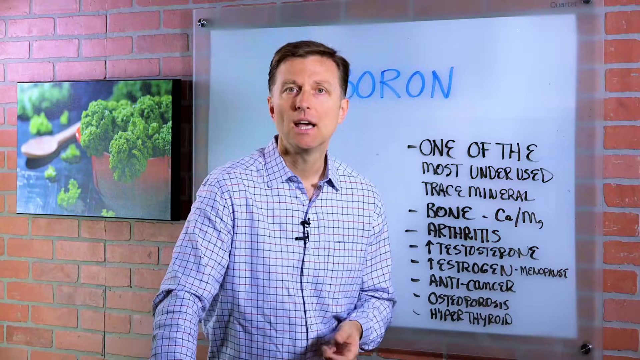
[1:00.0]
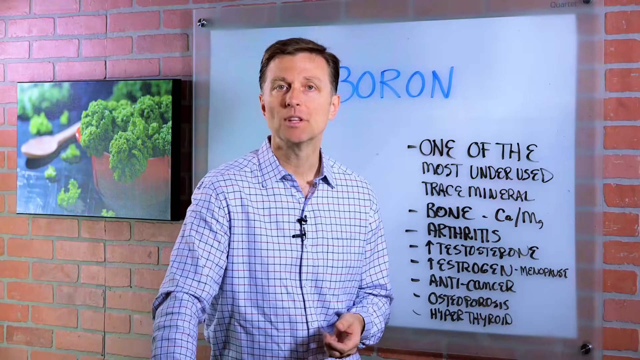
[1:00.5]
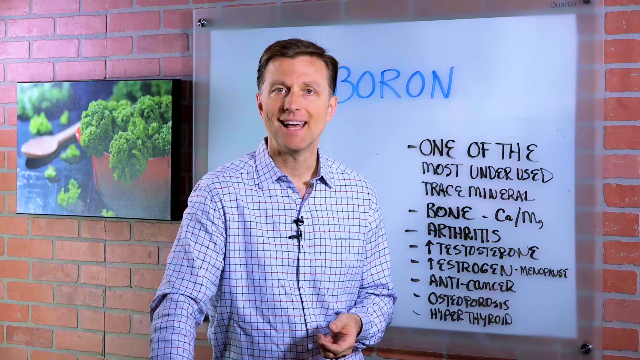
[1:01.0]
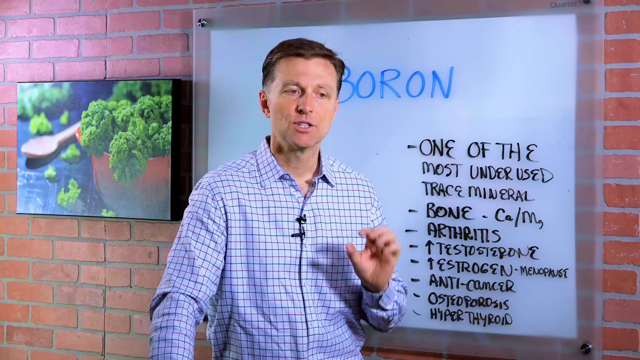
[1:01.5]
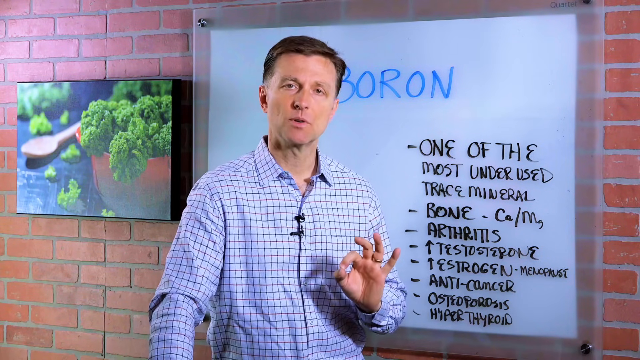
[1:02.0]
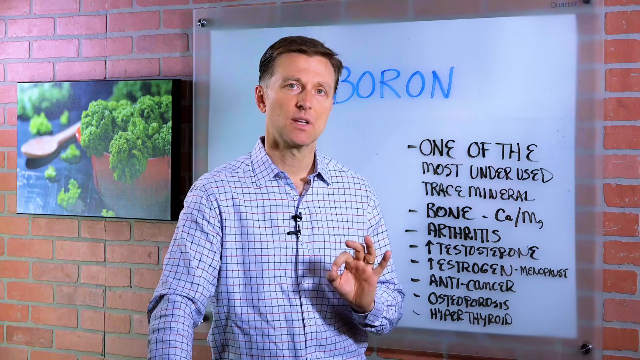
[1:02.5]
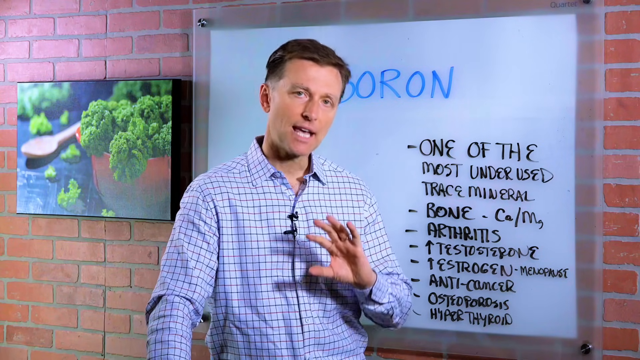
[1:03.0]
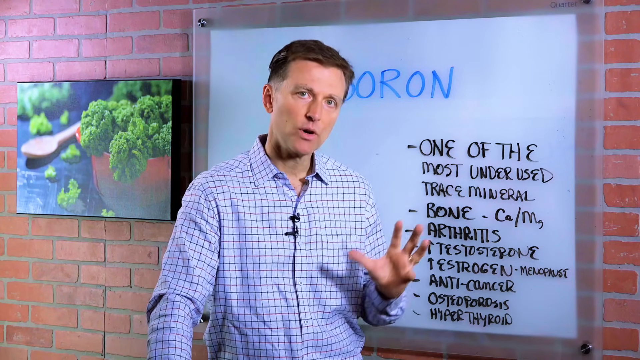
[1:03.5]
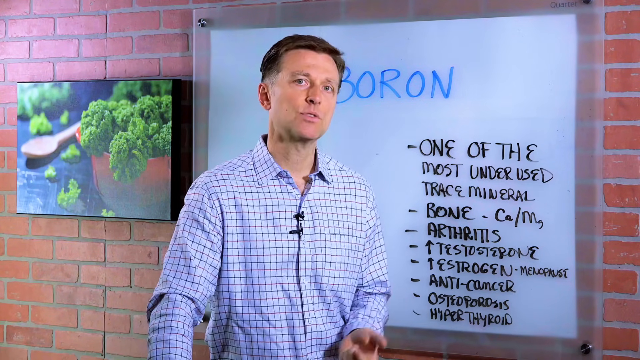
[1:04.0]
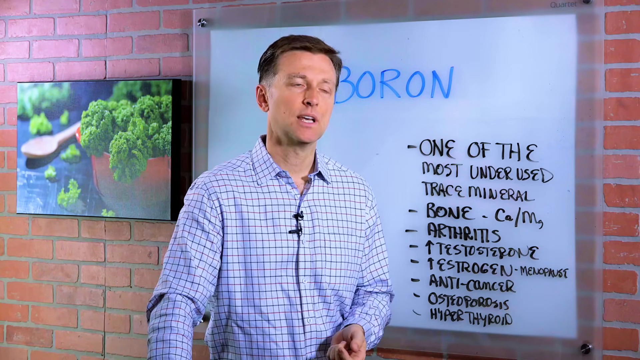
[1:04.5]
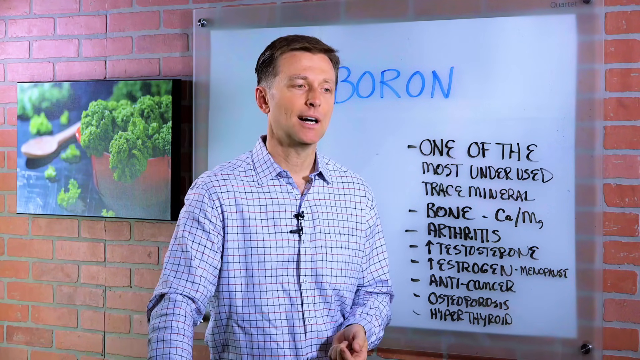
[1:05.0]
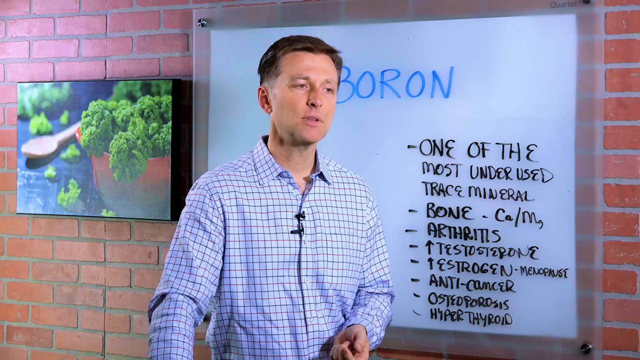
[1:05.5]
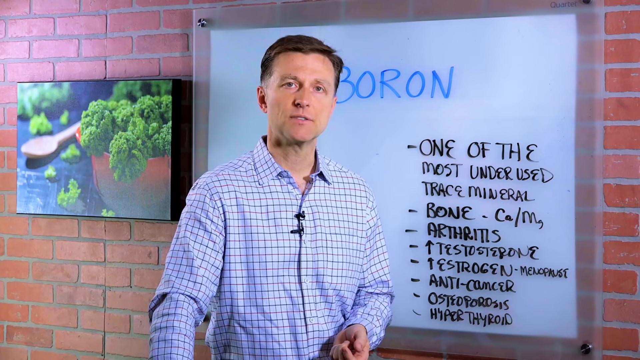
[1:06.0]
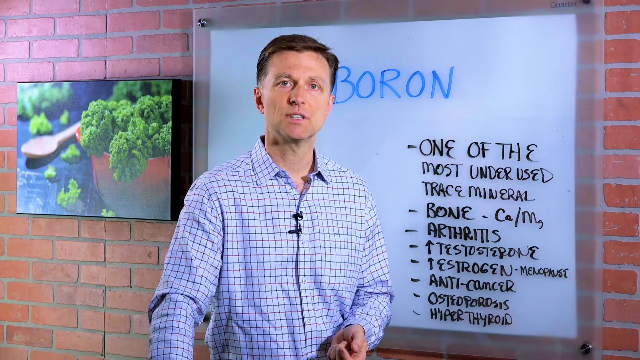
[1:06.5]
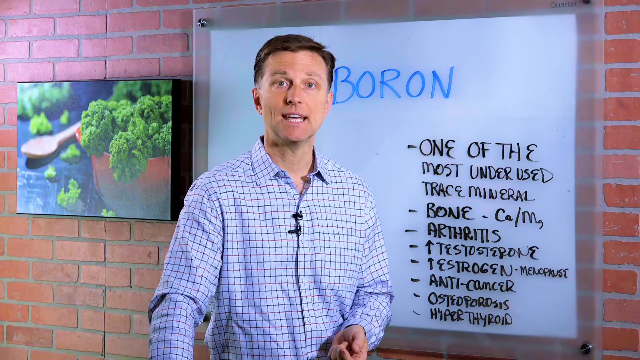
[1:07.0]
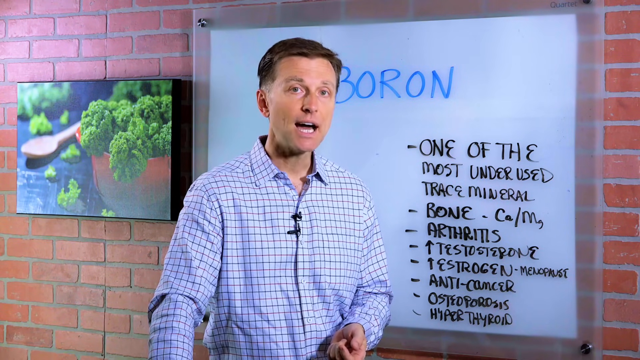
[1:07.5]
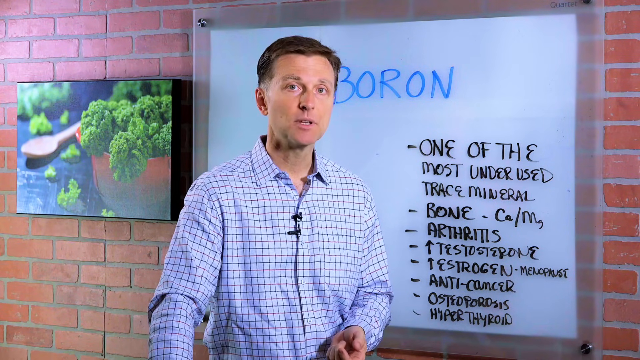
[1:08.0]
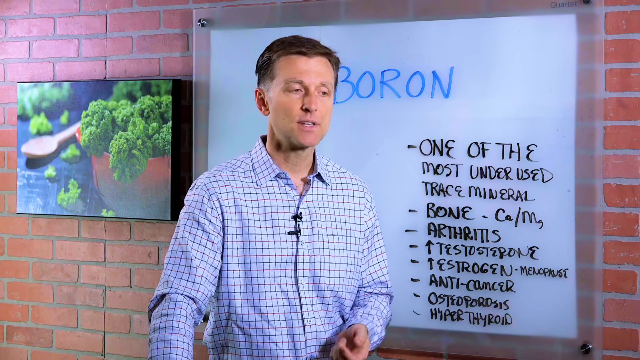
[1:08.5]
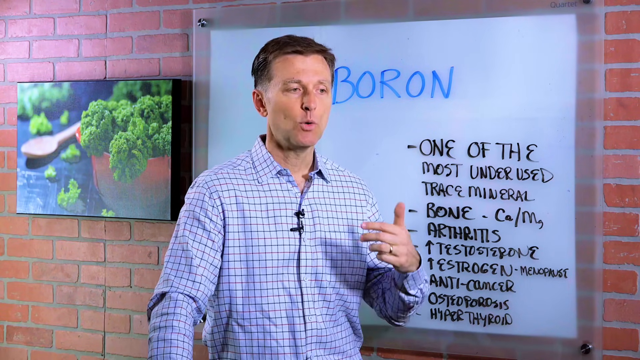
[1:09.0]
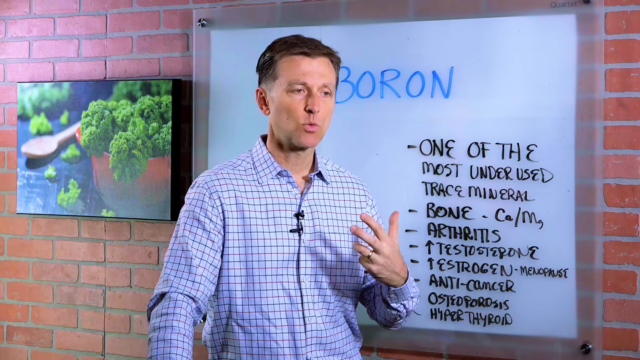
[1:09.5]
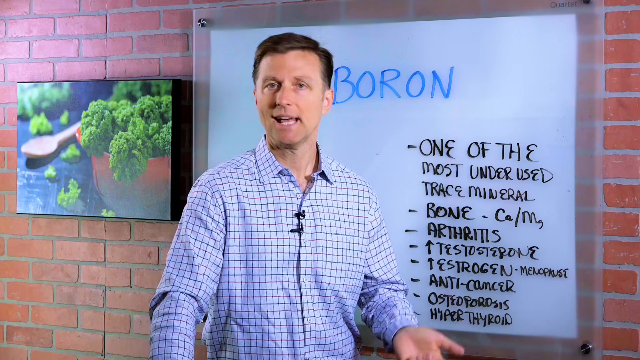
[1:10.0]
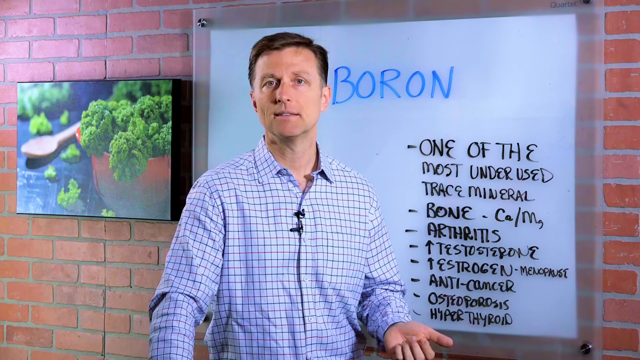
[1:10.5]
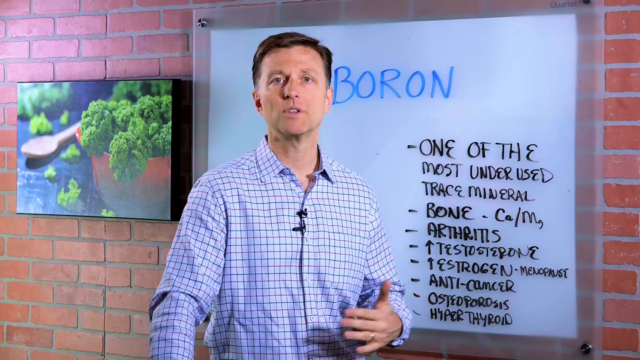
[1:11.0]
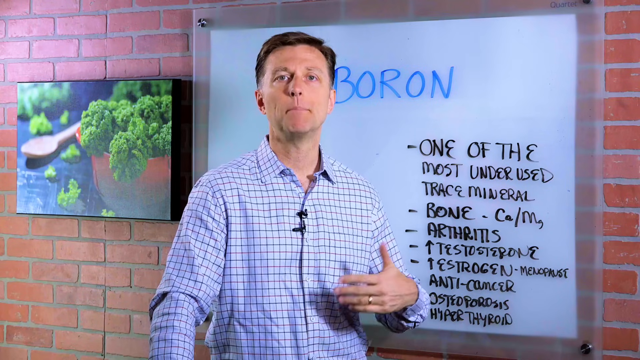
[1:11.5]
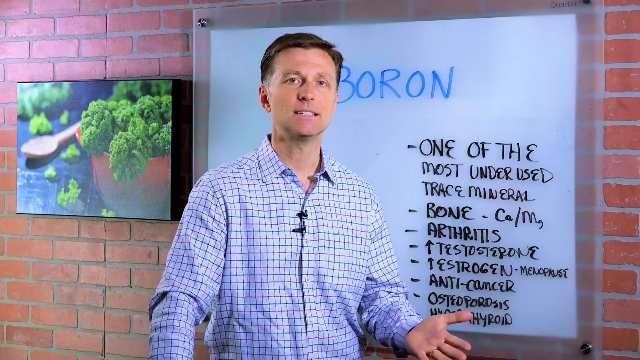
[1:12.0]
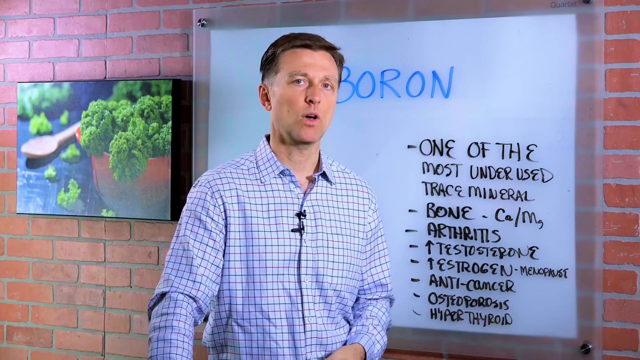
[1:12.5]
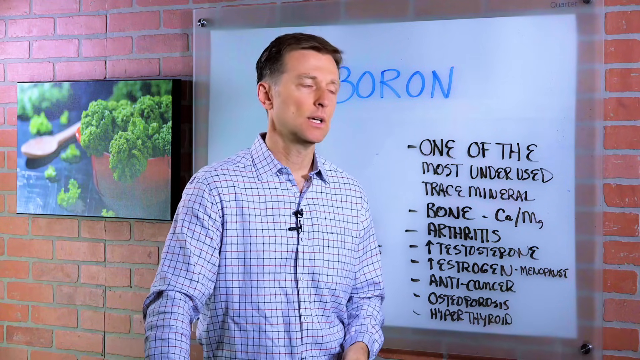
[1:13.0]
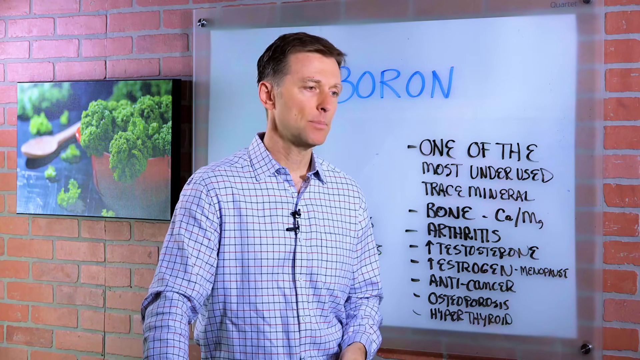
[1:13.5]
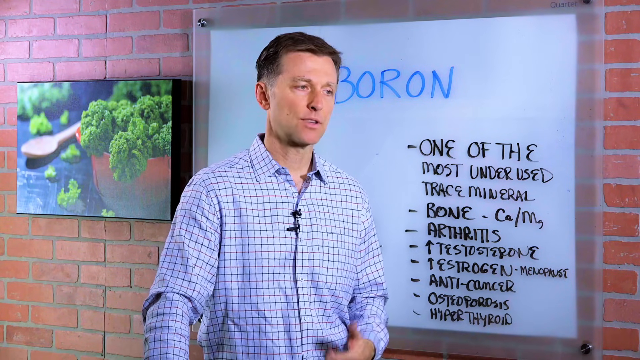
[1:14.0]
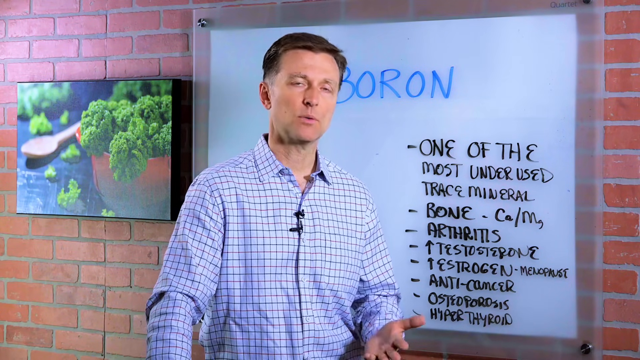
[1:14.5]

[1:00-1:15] A man with brown hair, wearing a light blue long-sleeve button-up shirt, stands in front of a white board with the word "Boron" written in blue. Beside it, the board says "one of the most underrated trace minerals," followed by the words "bone," "arthritis," "testosterone," "estrogen," "anti-cancer," "osteoporosis," and "hypothyroid." Everything on the board is written in black except the word "Boron," which is in blue. The board is up against a wall of maroon bricks. To the right of the board is a small square painting of a brown bowl with broccoli in it, with a small brown spoon beside the bowl. The man stands facing the camera, talking directly to it, with a small black microphone on his shirt.